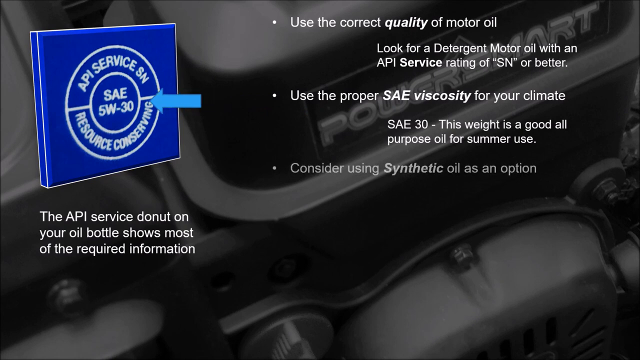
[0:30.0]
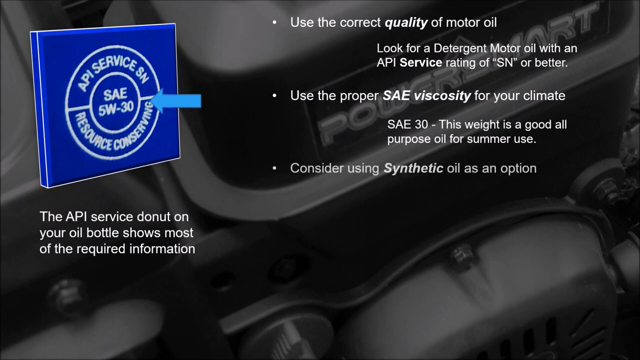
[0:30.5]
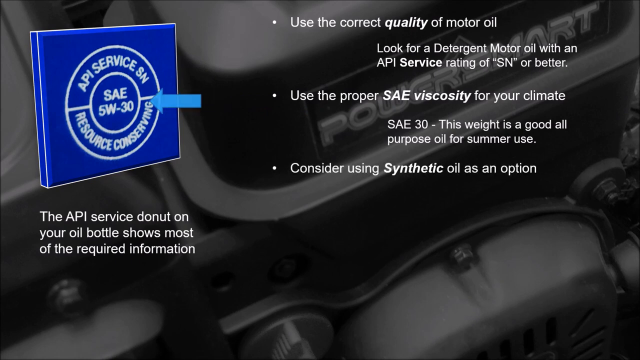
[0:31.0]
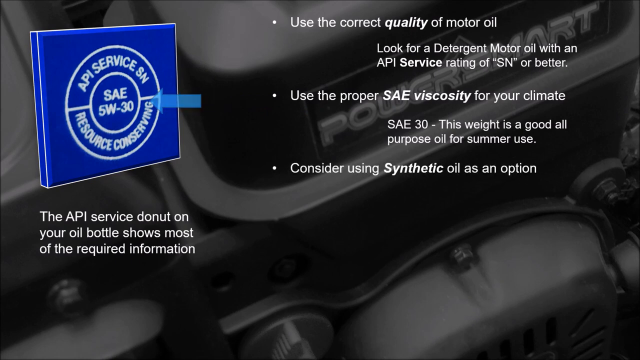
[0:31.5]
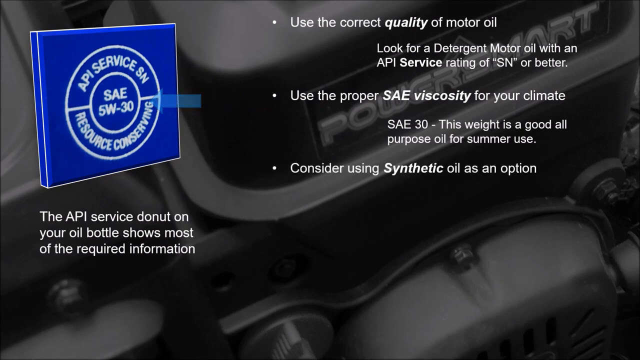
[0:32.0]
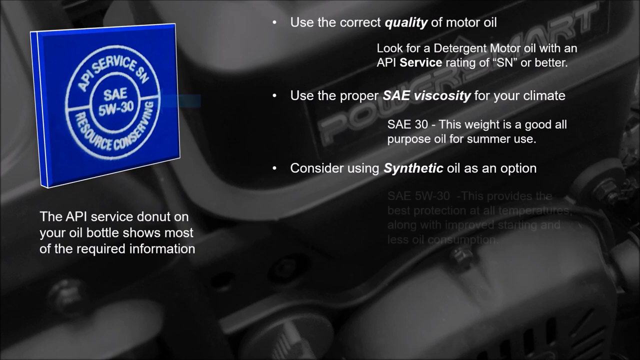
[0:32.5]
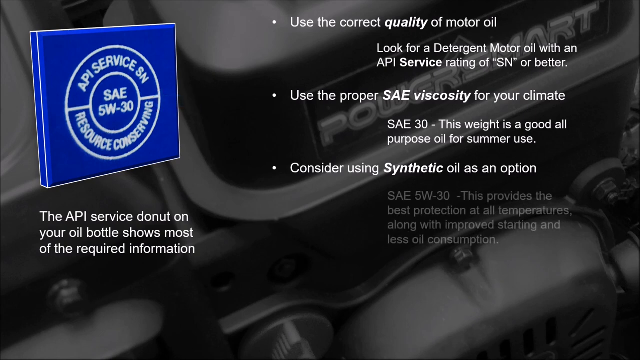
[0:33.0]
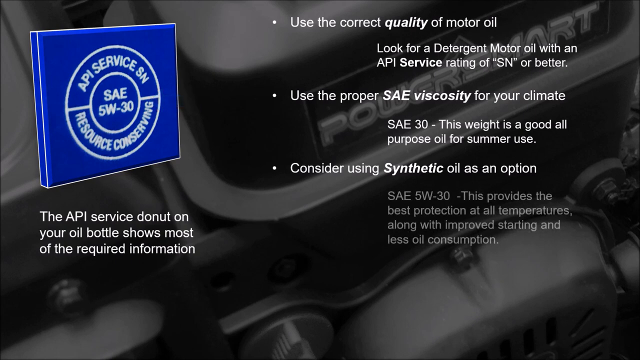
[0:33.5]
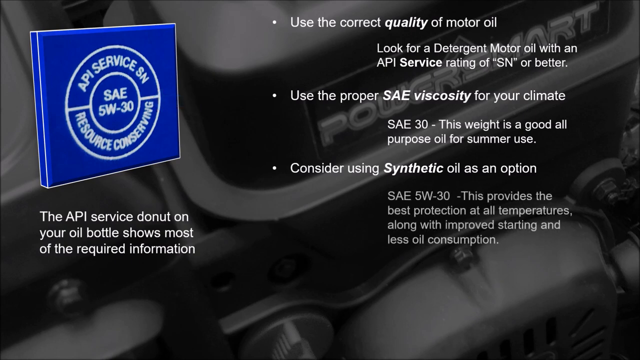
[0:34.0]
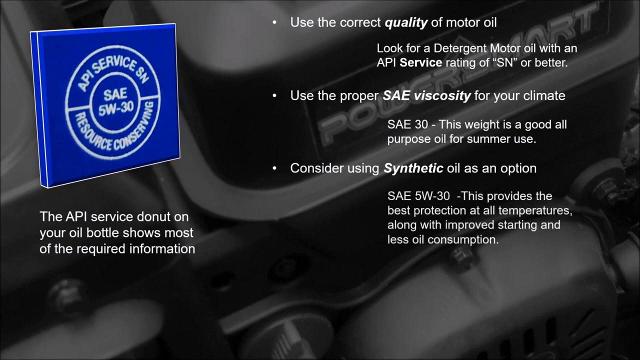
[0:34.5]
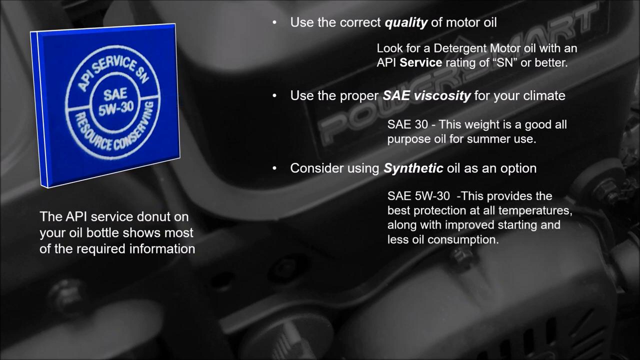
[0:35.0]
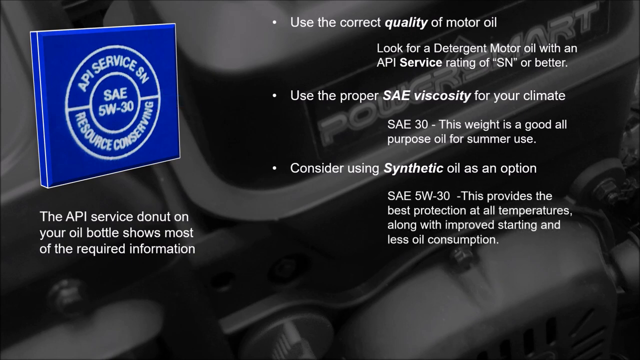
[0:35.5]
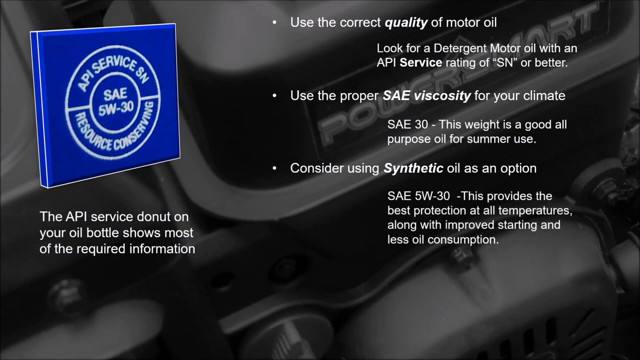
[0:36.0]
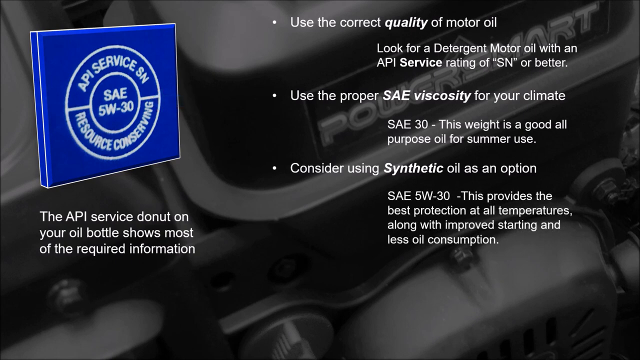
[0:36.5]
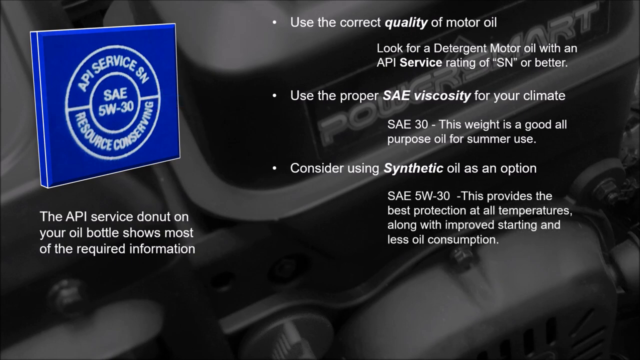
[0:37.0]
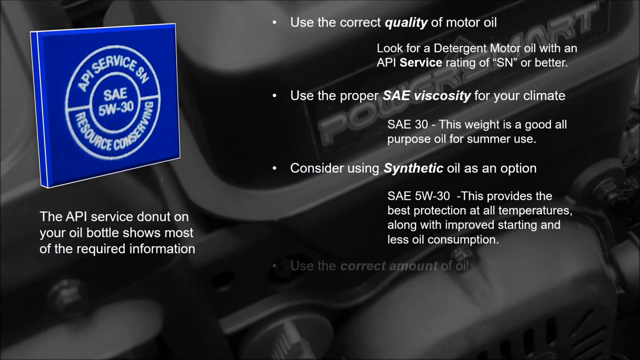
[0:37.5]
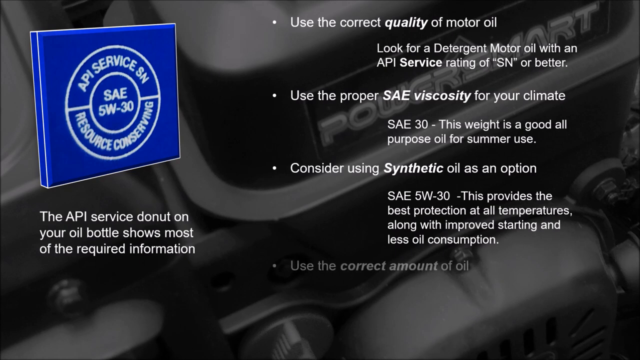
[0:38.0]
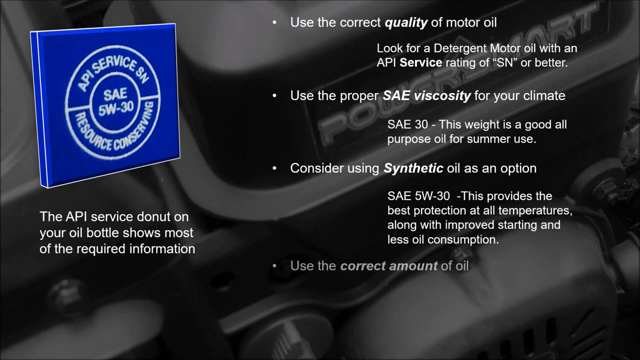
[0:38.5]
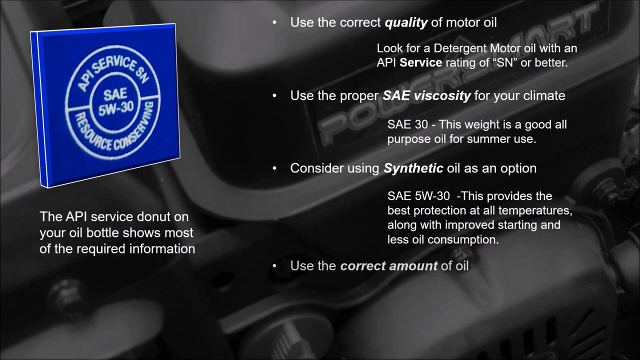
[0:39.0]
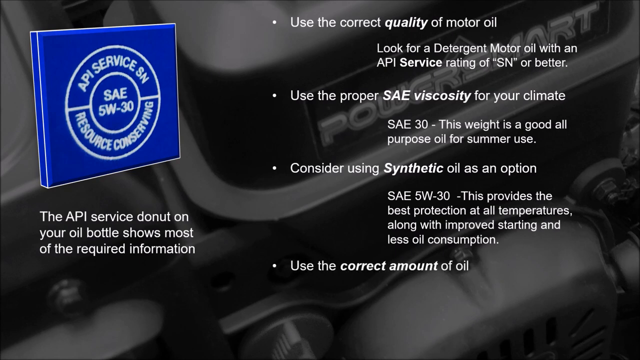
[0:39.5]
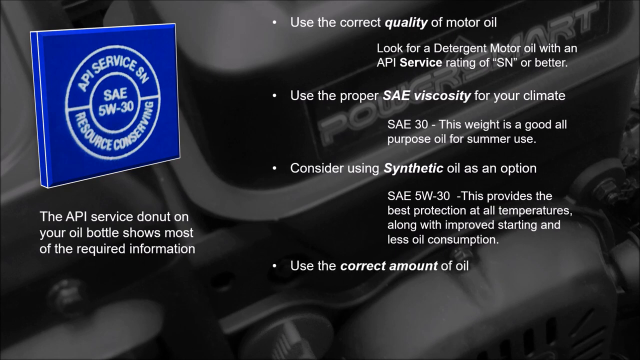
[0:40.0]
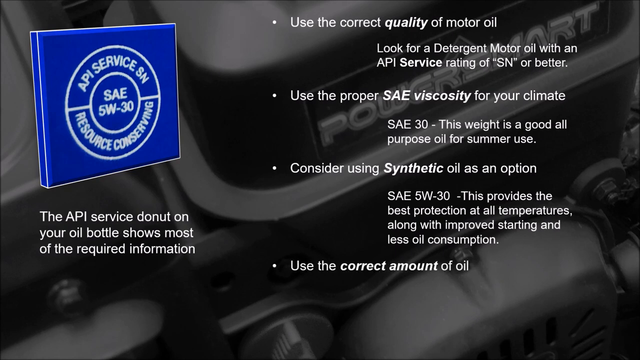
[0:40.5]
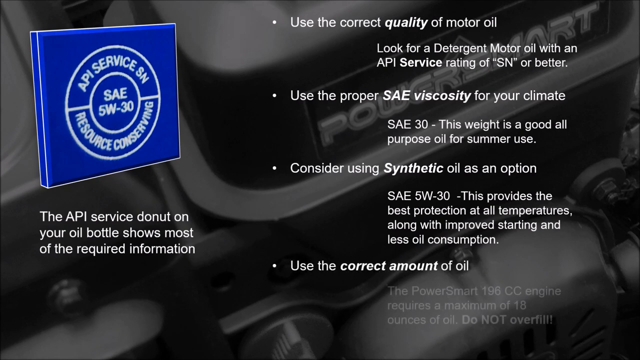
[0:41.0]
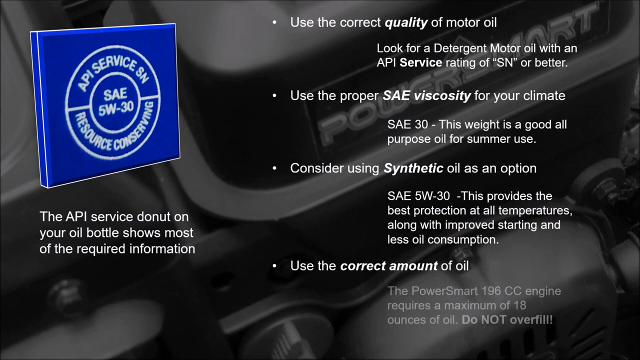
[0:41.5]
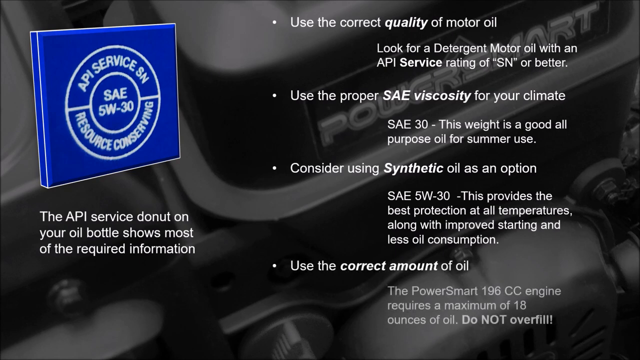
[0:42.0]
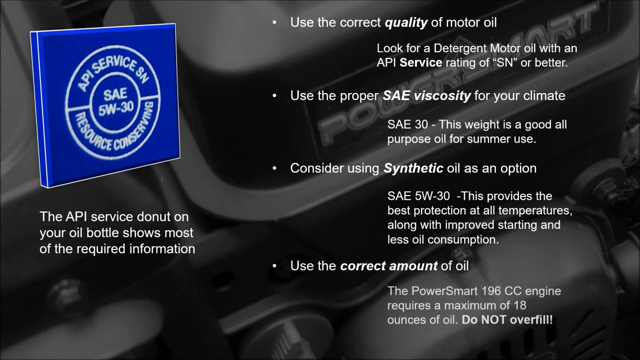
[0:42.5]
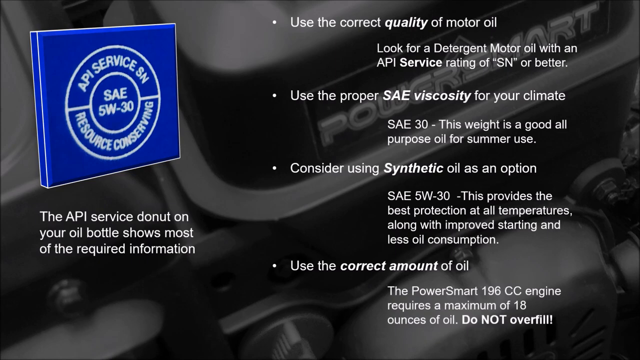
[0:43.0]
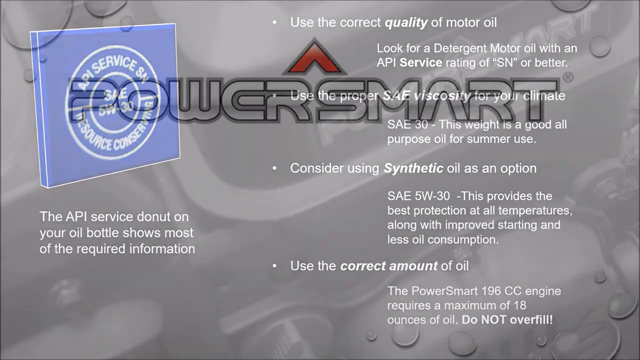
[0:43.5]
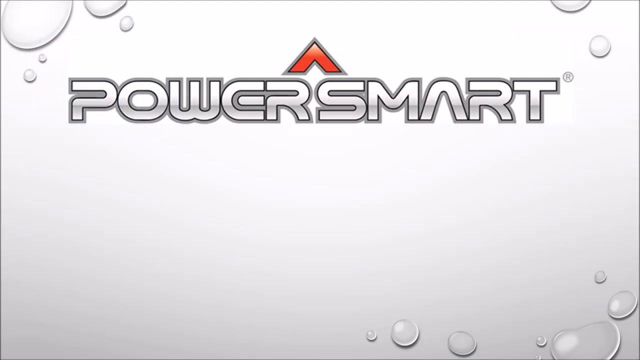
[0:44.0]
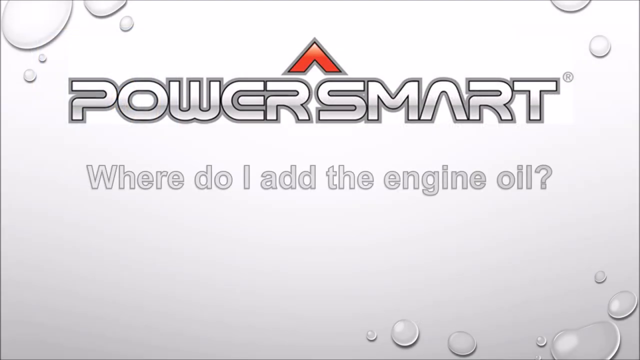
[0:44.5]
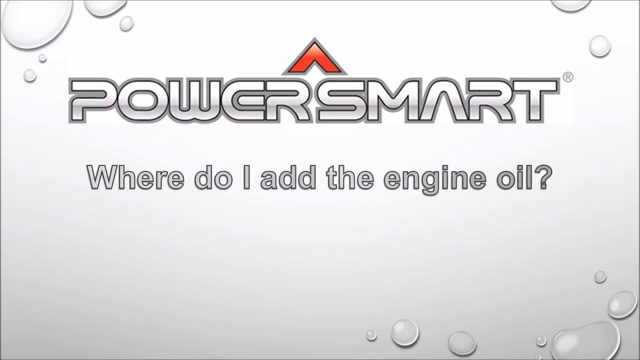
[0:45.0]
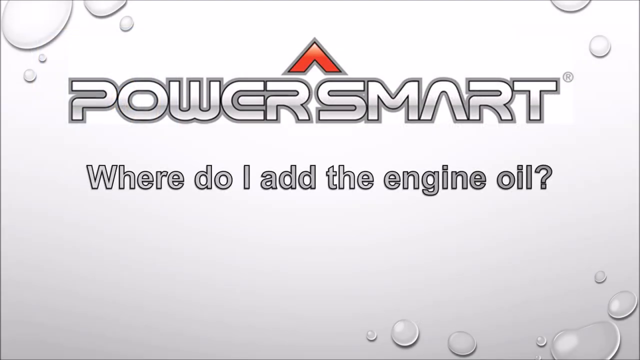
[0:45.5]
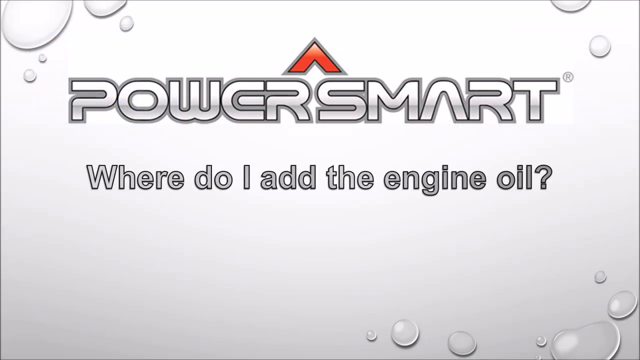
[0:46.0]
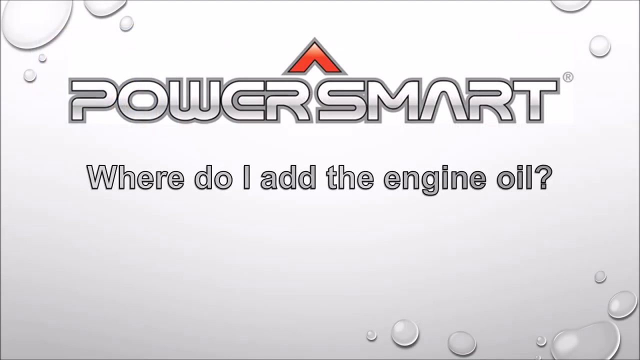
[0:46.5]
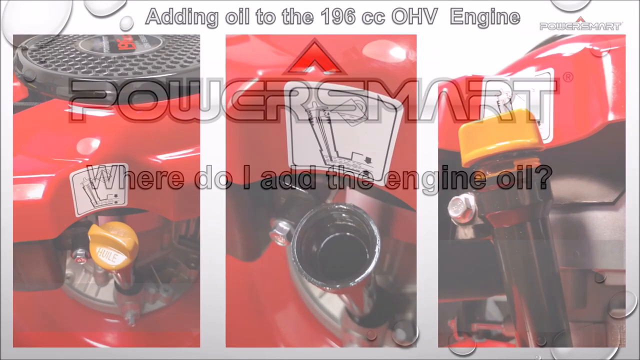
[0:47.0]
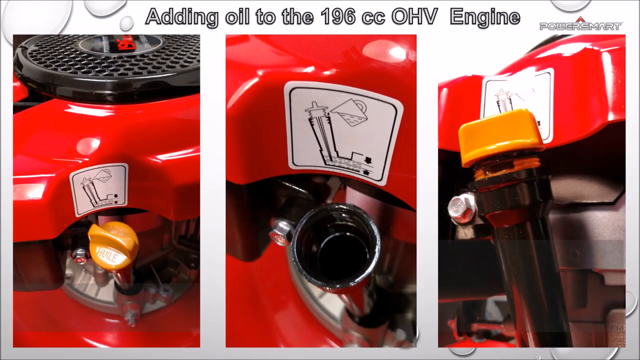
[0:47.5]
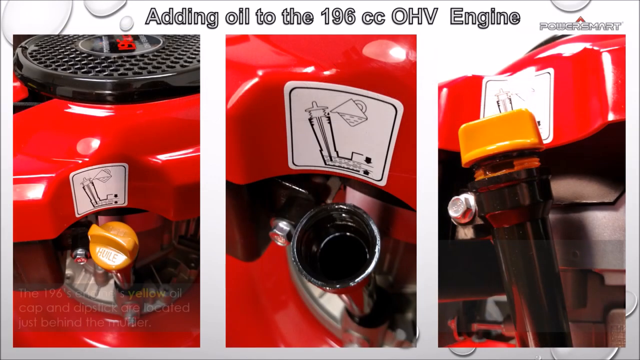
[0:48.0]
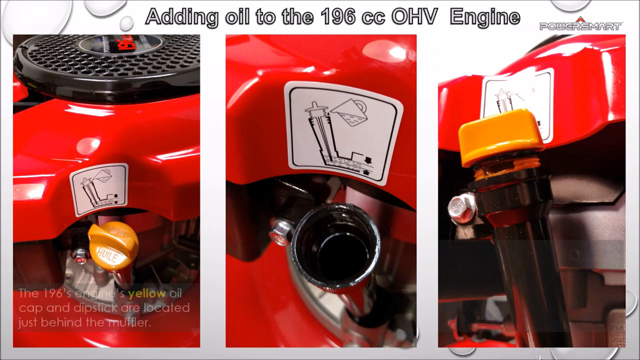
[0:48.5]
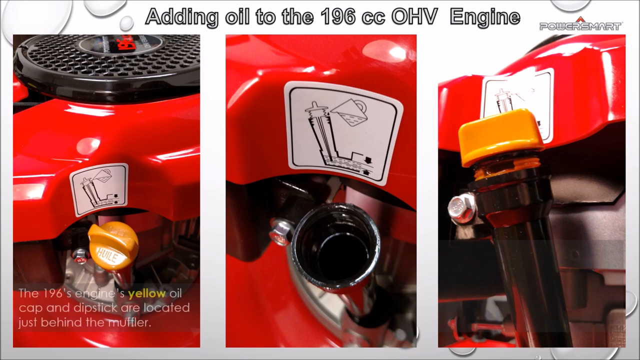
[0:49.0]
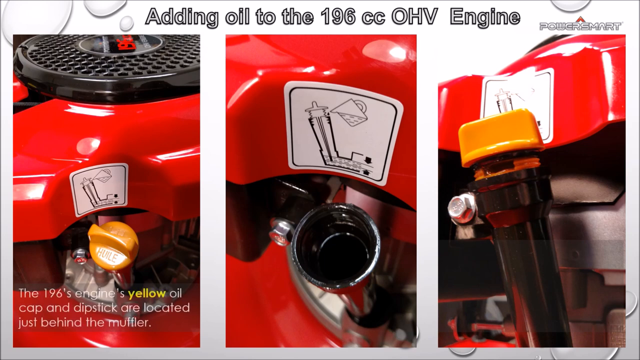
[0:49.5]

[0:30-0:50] The PowerSmart lawnmower engine is in the background with the earlier instructions still on screen. More instructions appear, such as "SAE 5W-30. This provides the best protection at all temperatures, along with improved starting and less oil consumptions." Next the instructions say "use the correct amount of oil", and finally "the PowerSmart 196 CC engine requires a maximum amount of 18 ounces of oil. Do not overfill." The scene transitions to the PowerSmart logo on the white background with bubbles and the red triangle on top, and below the logo in the middle of the screen is the sentence "where do I add the engine oil?" A new scene then shows three different pictures of a red lawnmower showing how to access the oil: the first shows the orange cap where the oil should go, the second shows it being removed, and the third shows it going back onto the oil pipe. The PowerSmart logo is at the top right, and at the top the text reads "adding oil to the 196 cc OHV engine".